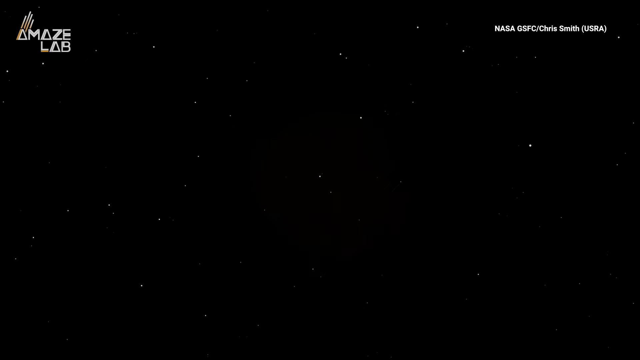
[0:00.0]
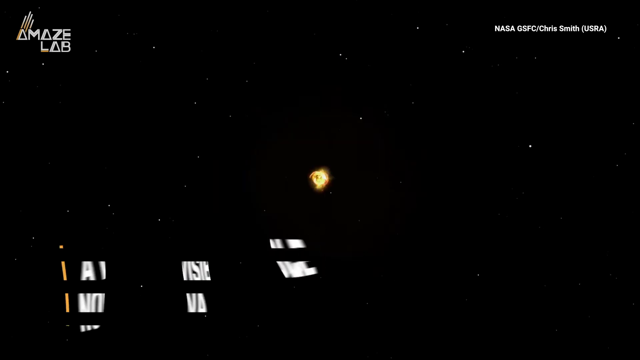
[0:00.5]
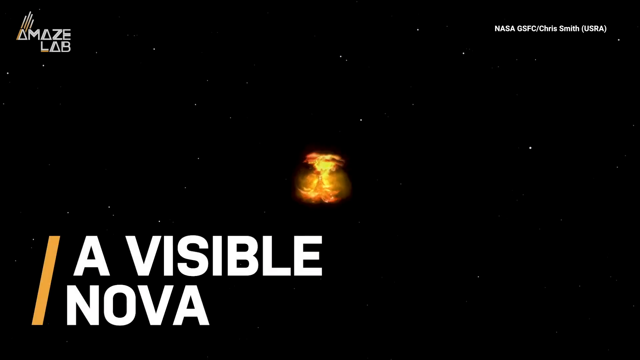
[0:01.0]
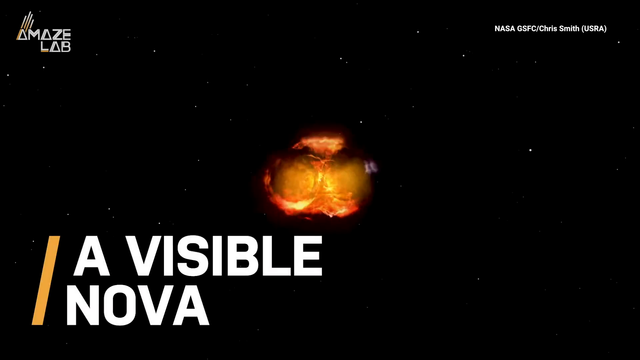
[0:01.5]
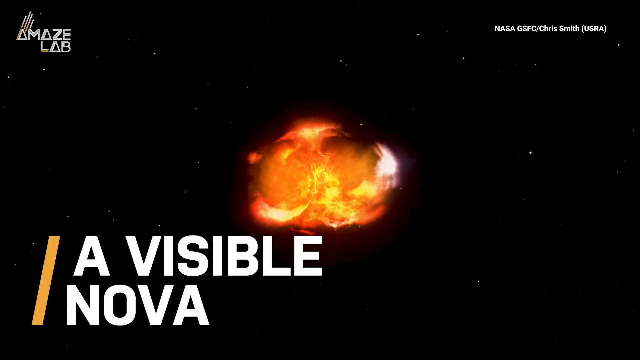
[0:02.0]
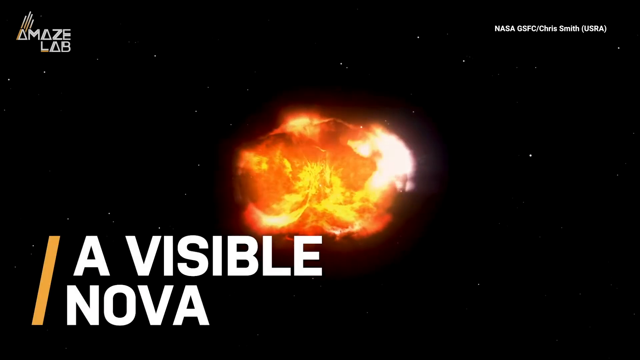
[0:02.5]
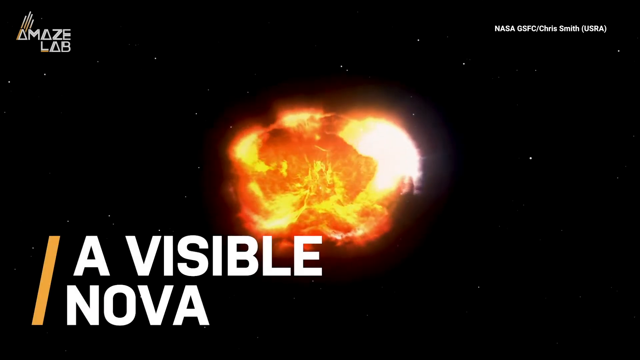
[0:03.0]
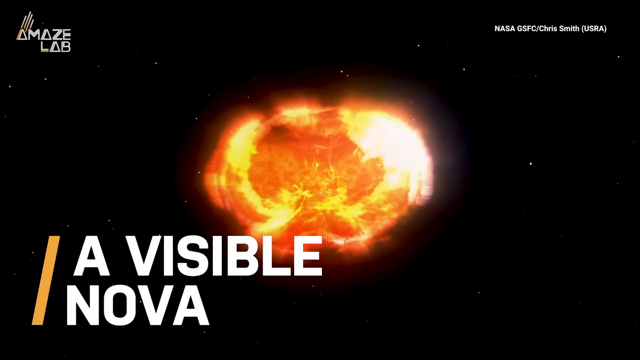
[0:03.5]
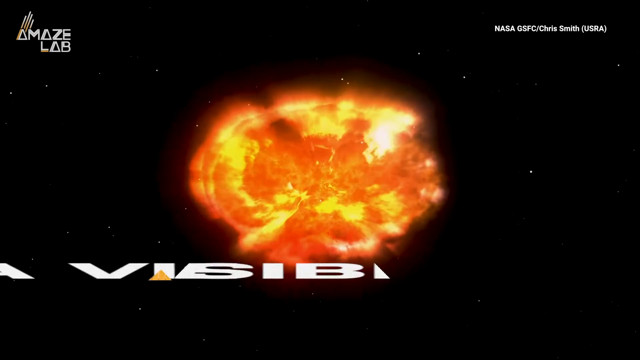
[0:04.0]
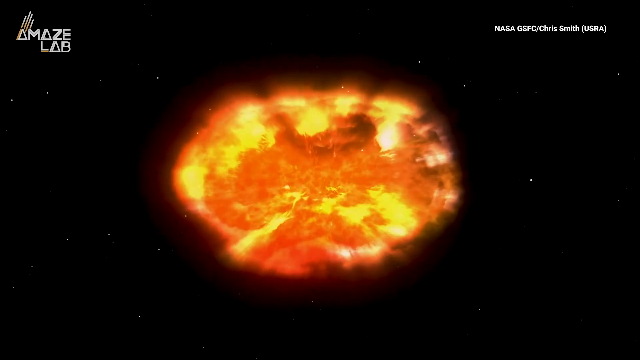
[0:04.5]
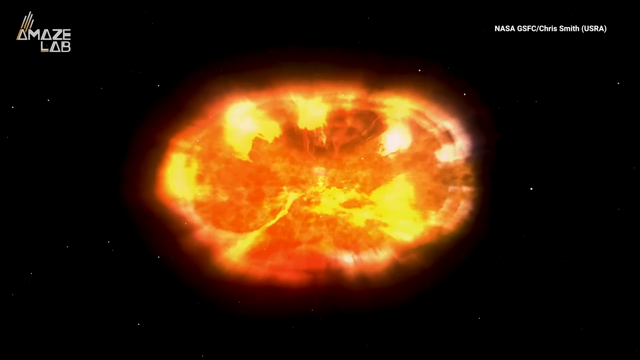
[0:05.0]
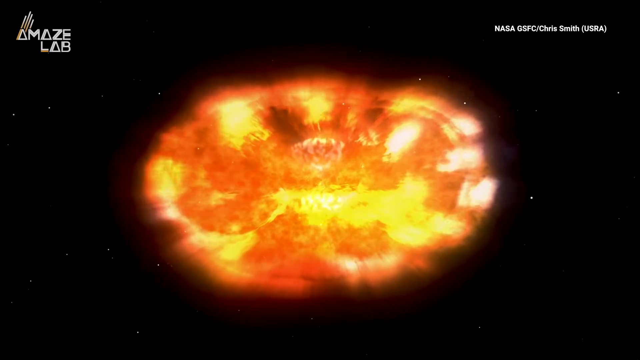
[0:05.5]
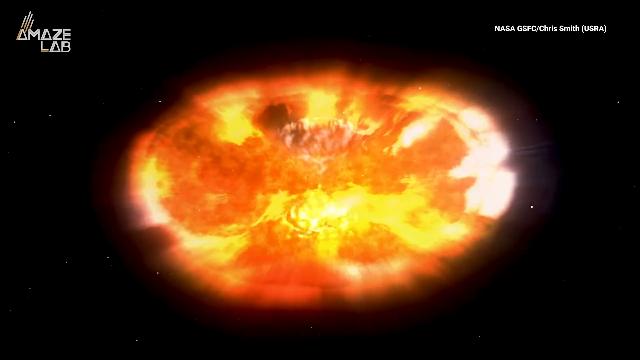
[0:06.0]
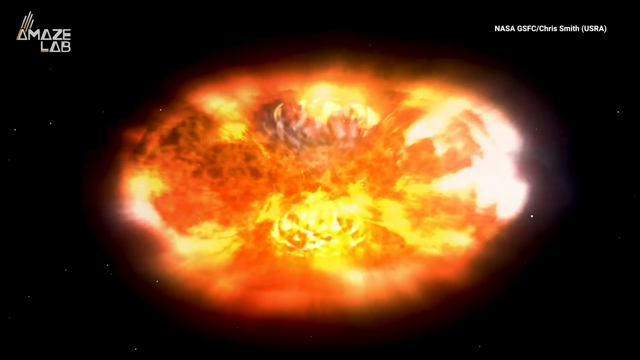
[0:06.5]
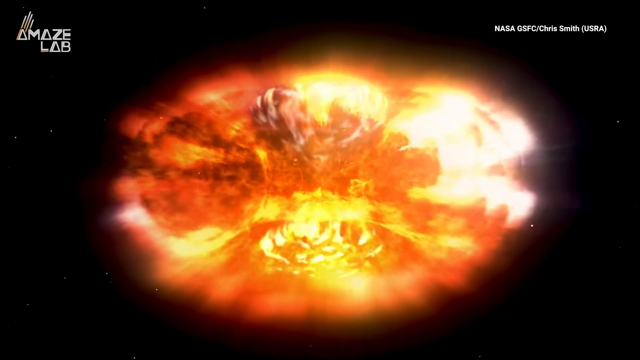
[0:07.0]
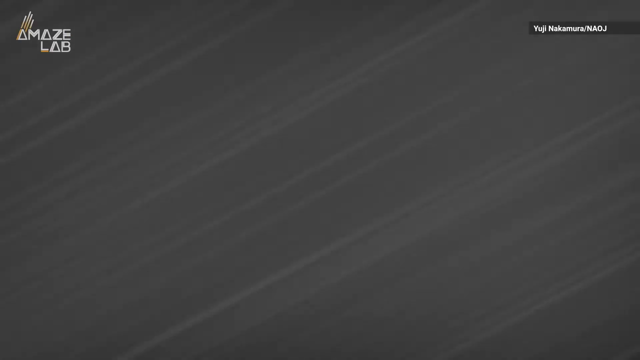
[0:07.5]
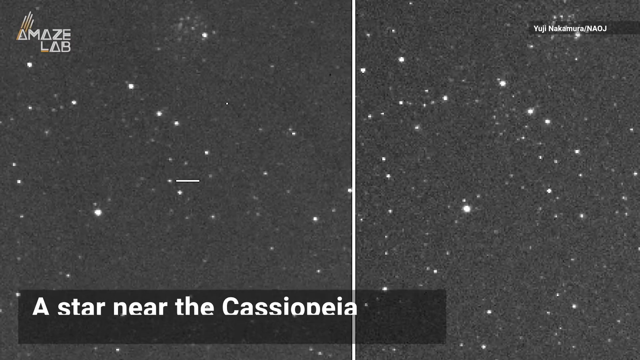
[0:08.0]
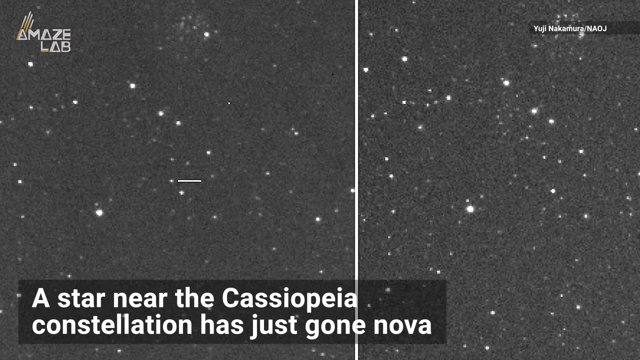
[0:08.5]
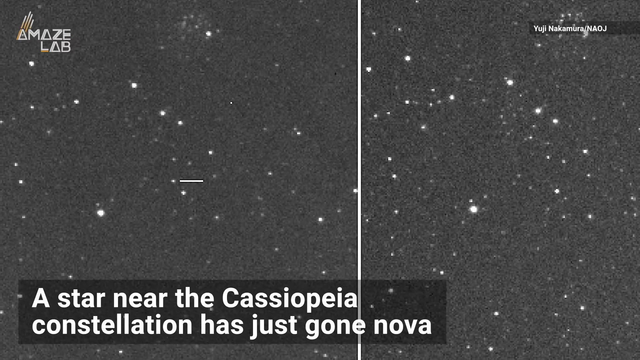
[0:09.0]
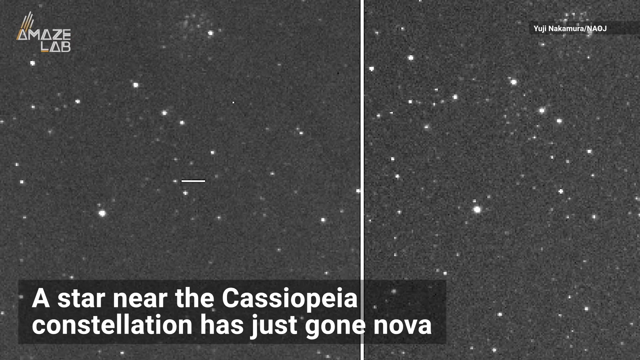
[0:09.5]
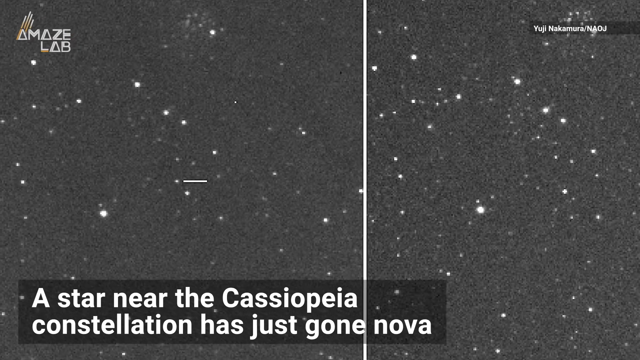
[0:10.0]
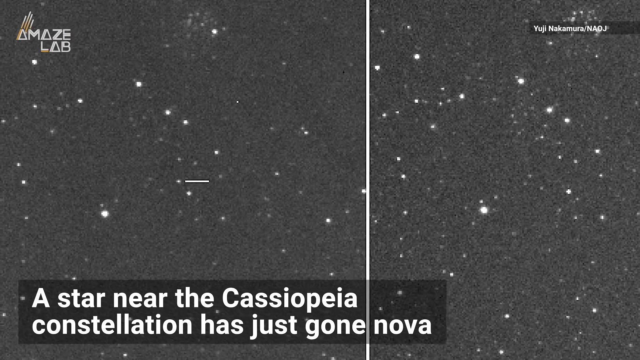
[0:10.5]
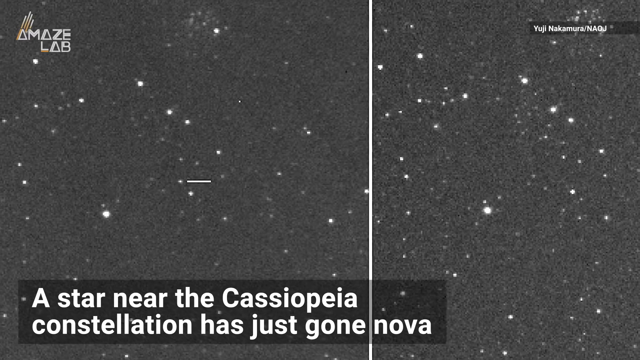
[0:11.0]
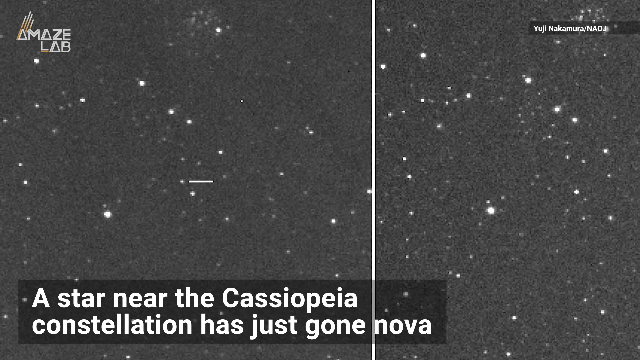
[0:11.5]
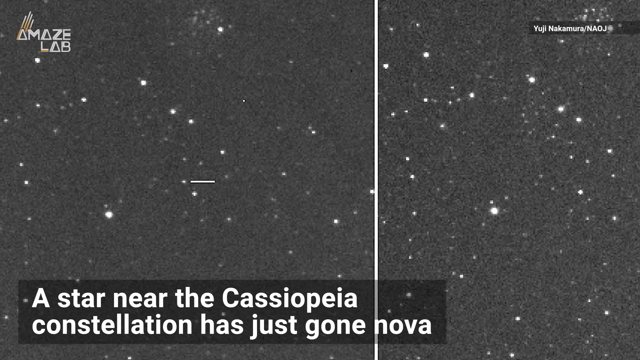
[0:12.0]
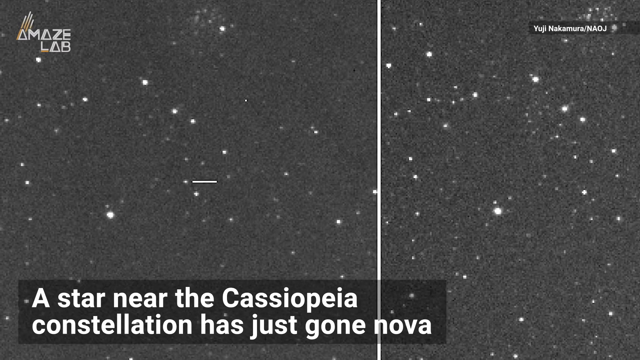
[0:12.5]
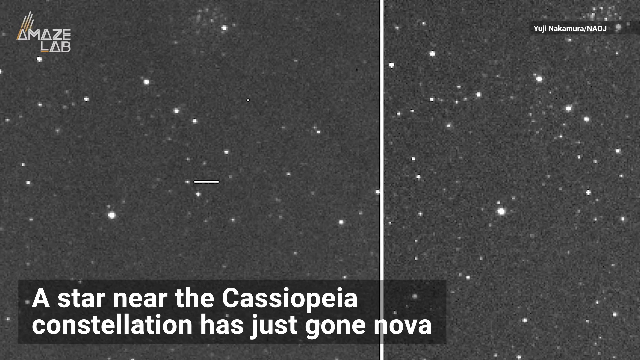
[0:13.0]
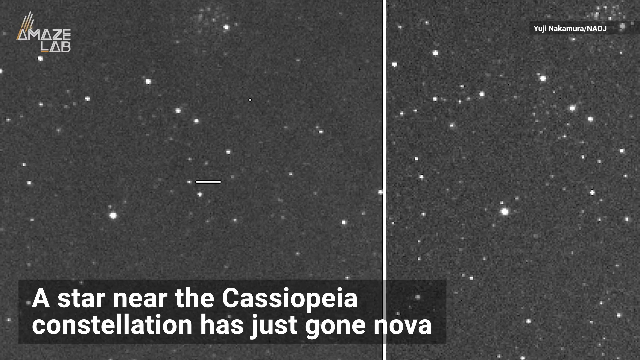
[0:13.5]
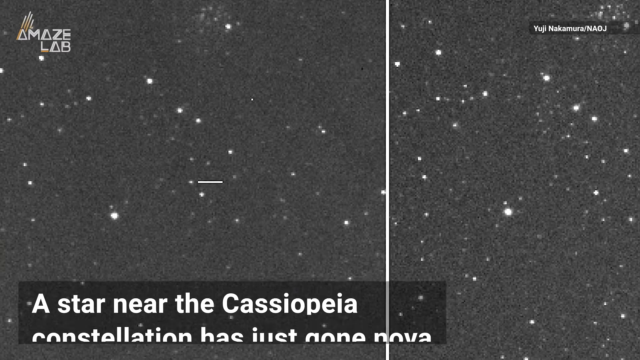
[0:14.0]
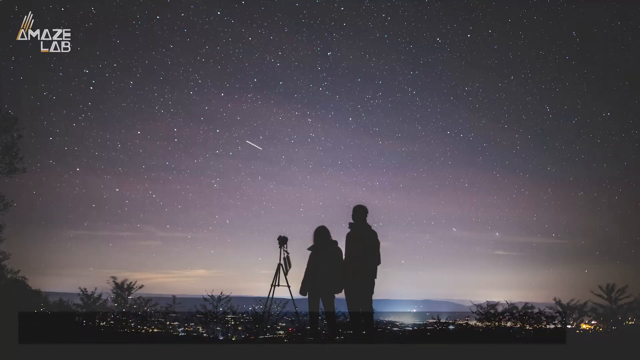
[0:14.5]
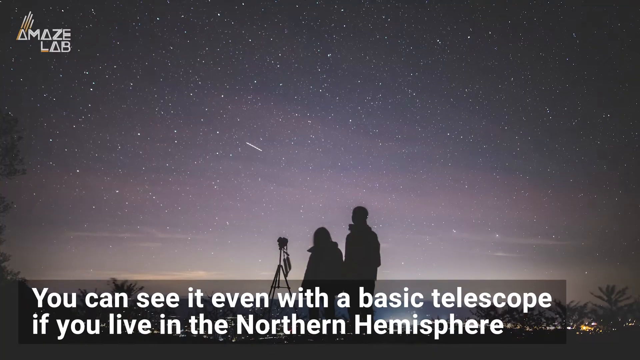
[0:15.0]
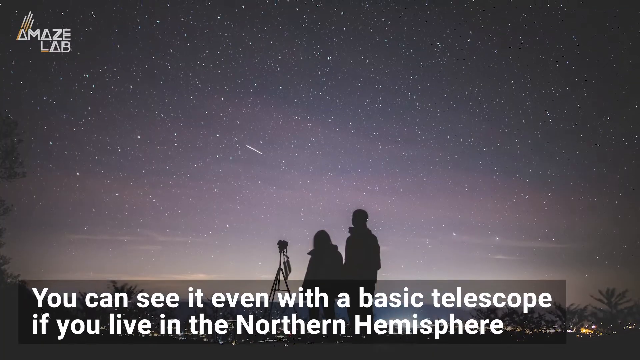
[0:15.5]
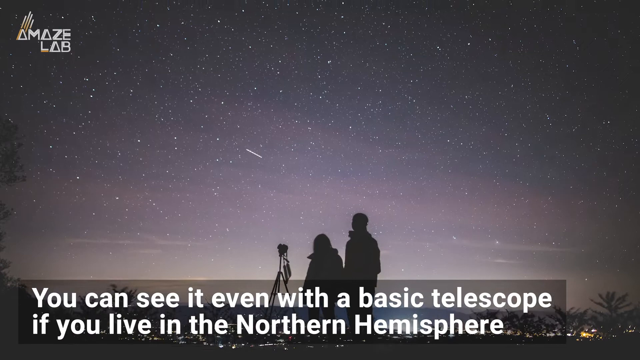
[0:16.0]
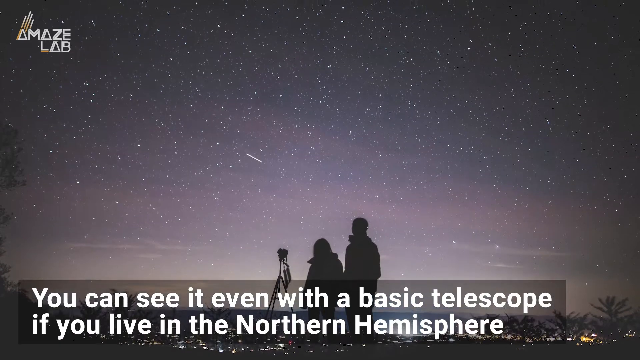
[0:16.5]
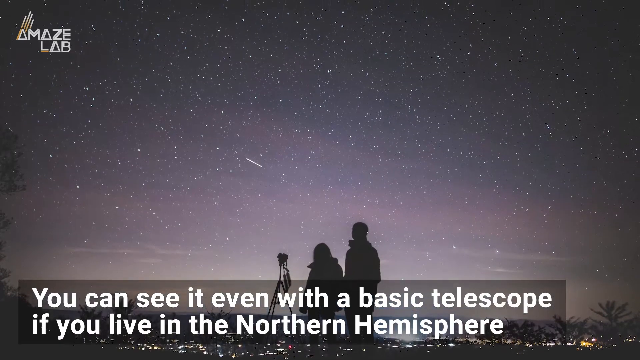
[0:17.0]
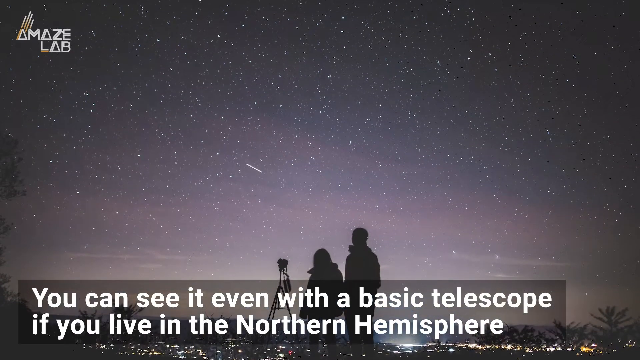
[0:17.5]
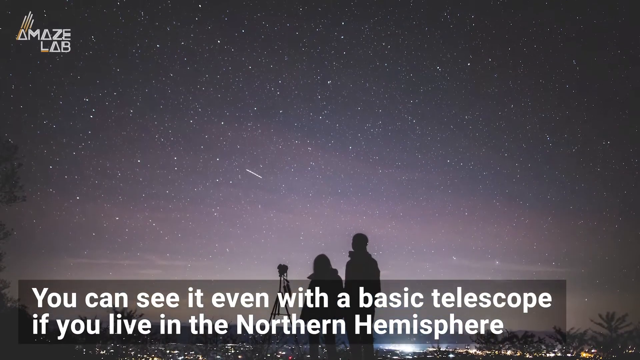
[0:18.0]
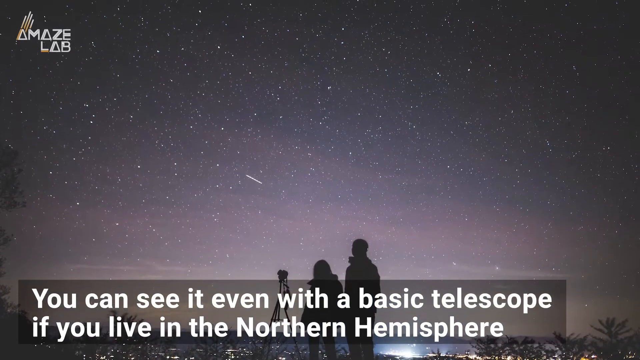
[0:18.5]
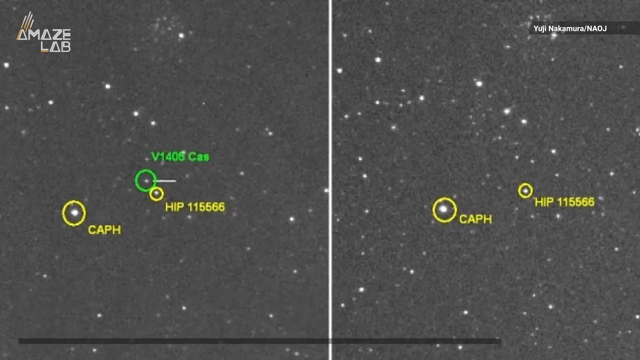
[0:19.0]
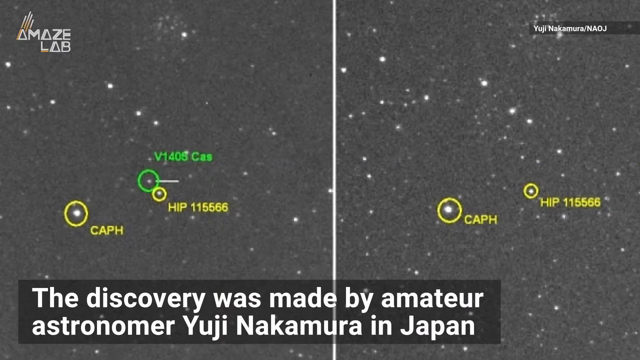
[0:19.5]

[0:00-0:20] An explosion appears in space, with text in the bottom corner mentioning a visible nova. A huge ball of flames and a massive explosion fill space; the text vanishes and the explosion fills the whole screen. The screen then changes to a different view, almost like a telescope view, with one little line pointing at something, and text mentions that a star near the Cassiopeia constellation has just gone nova. The view slightly zooms in on it. Next comes a picture of a couple standing on the earth near a telescope, looking up at the sky, where the same referenced point is shown; the text underneath them mentions that you can see it even with a basic telescope if you live in the northern hemisphere. The camera pans slightly up, and another slide follows that looks like it was probably taken with a satellite or NASA equipment, with various points labeled with yellow circles, for example CAPH and HIP 115565. The text beneath it mentions that the discovery was made by amateur astronomer Yuii Nakamura in Japan.